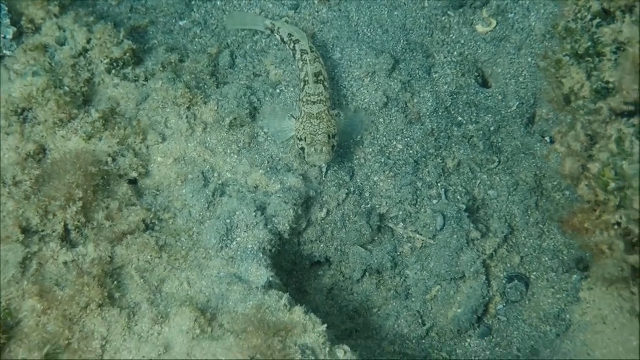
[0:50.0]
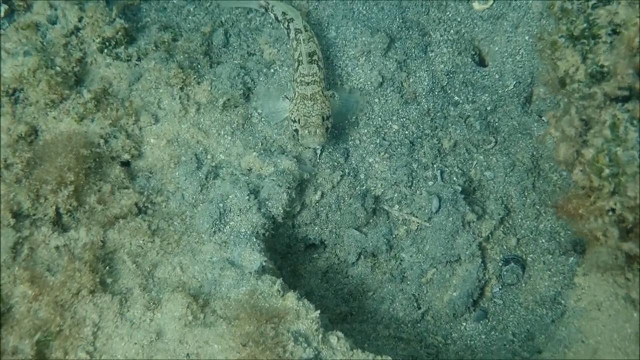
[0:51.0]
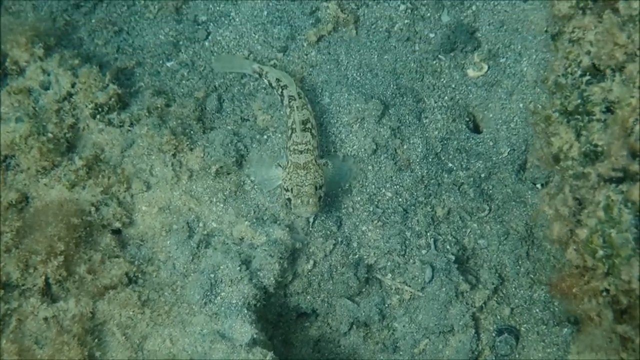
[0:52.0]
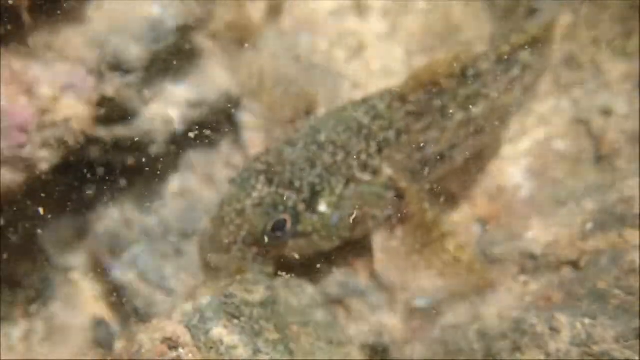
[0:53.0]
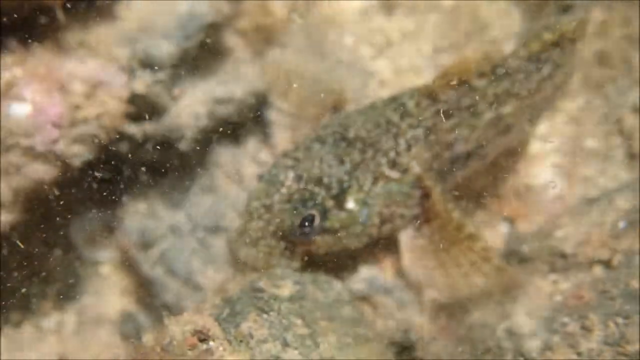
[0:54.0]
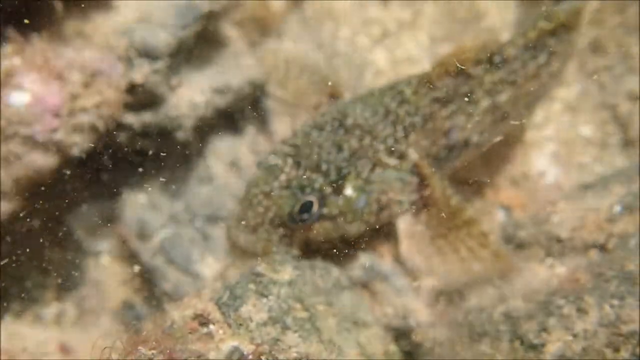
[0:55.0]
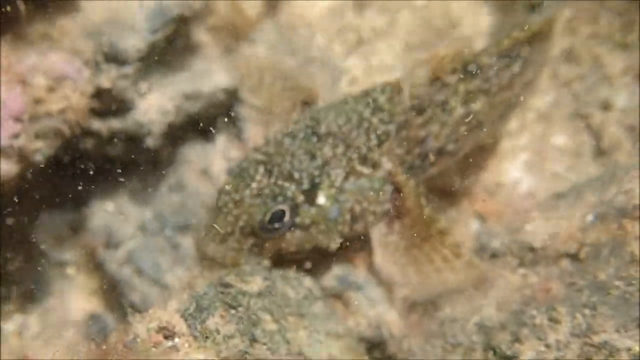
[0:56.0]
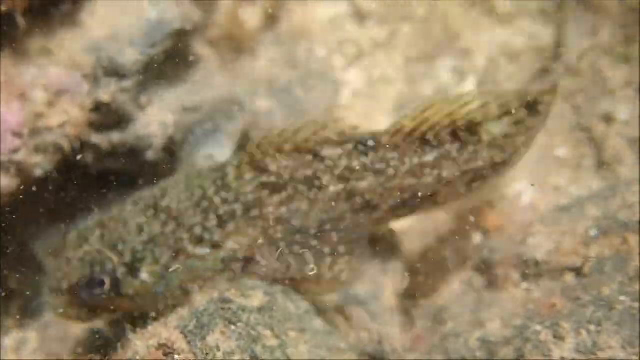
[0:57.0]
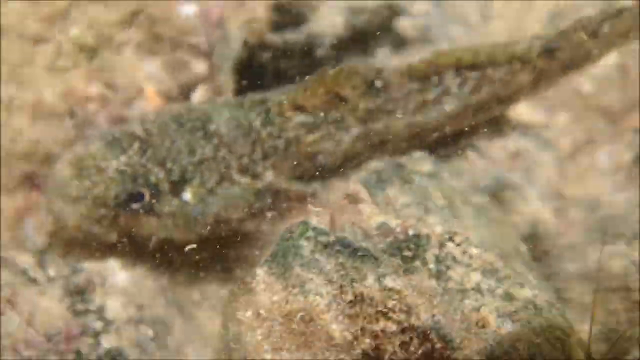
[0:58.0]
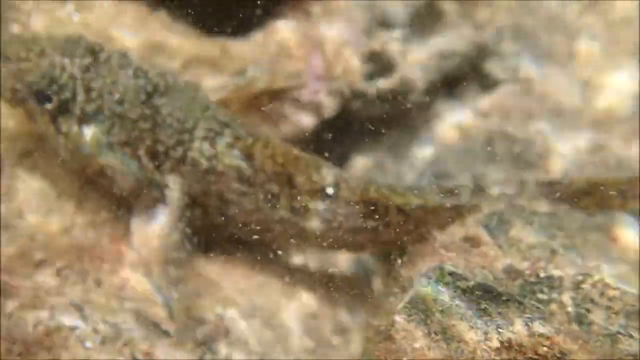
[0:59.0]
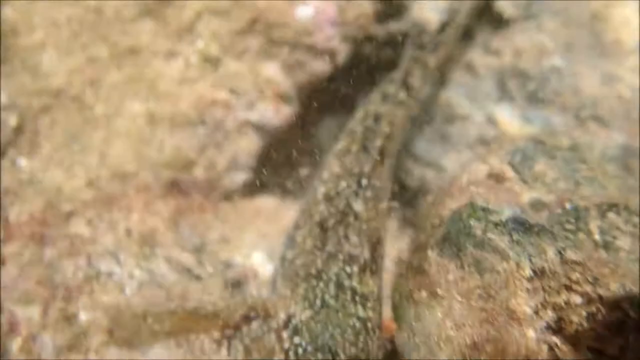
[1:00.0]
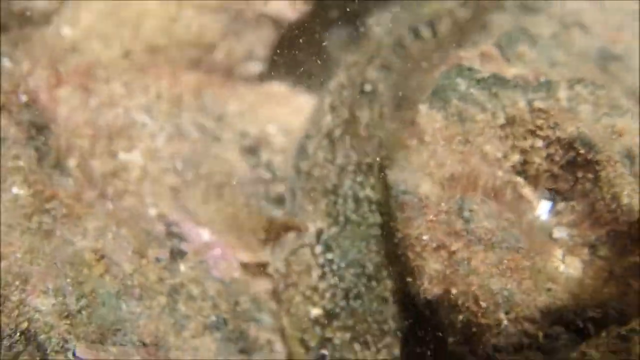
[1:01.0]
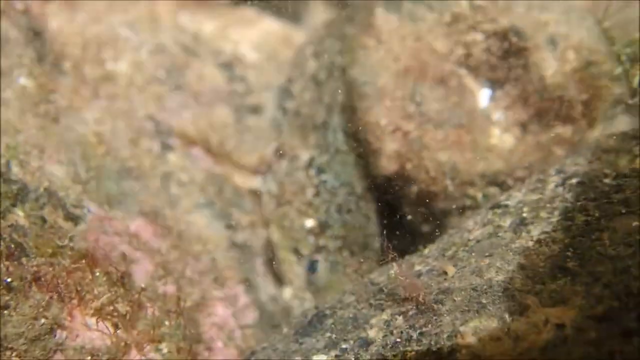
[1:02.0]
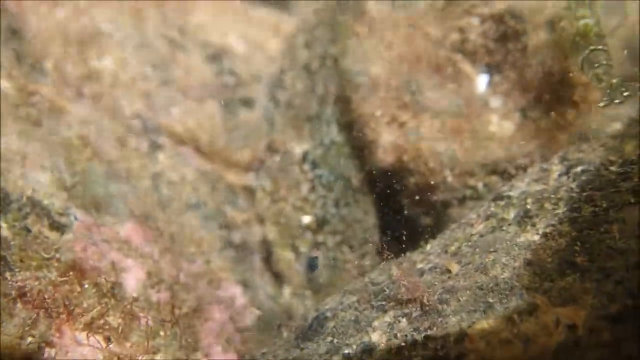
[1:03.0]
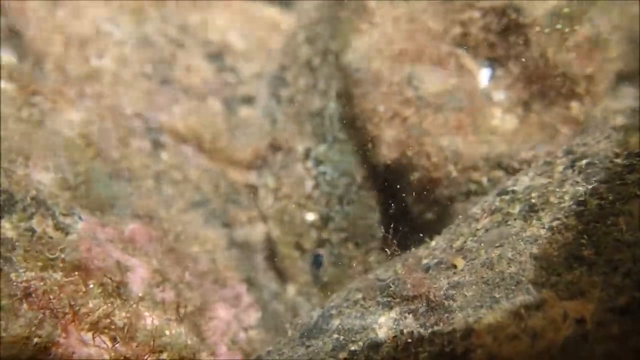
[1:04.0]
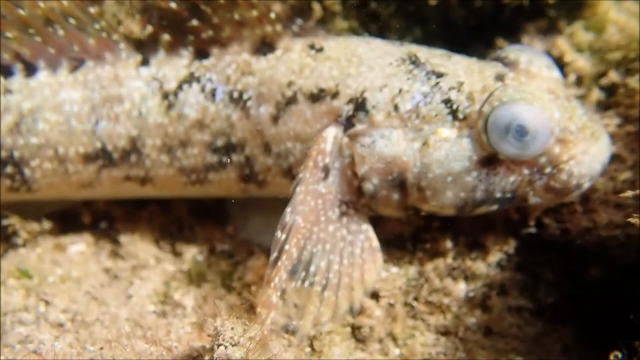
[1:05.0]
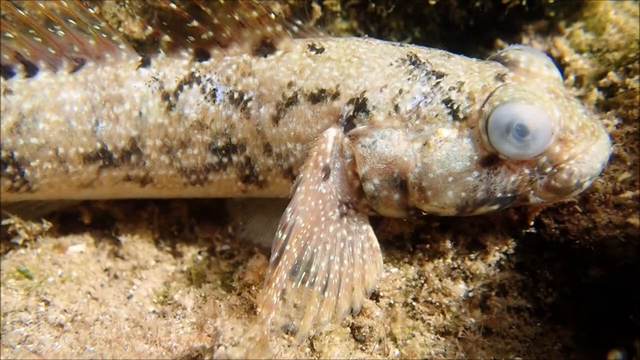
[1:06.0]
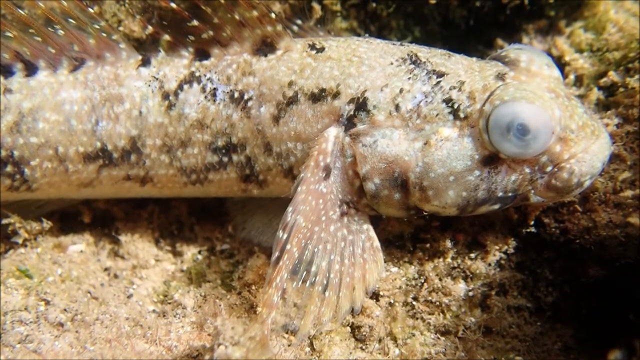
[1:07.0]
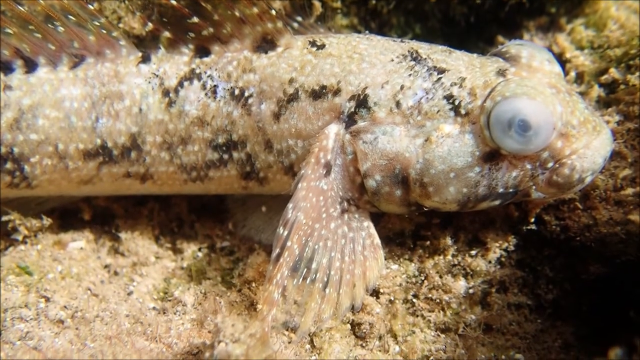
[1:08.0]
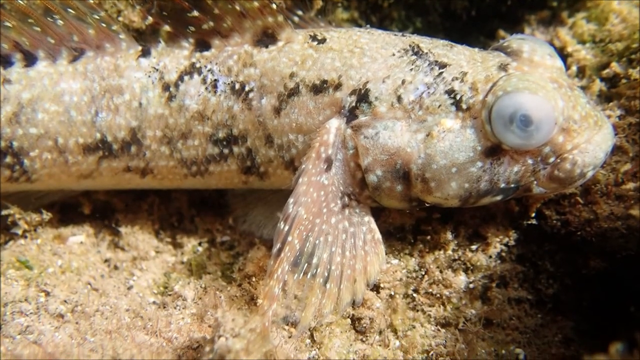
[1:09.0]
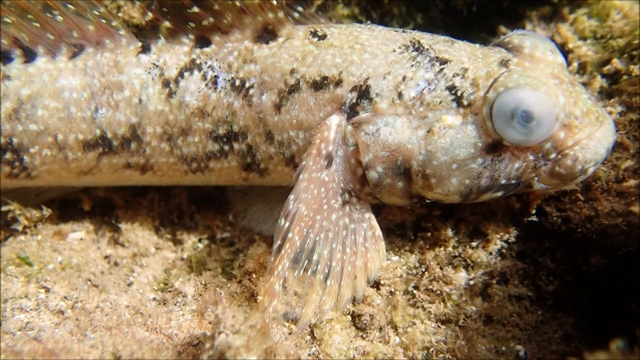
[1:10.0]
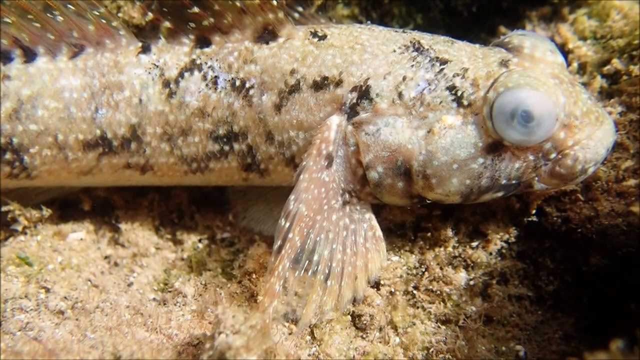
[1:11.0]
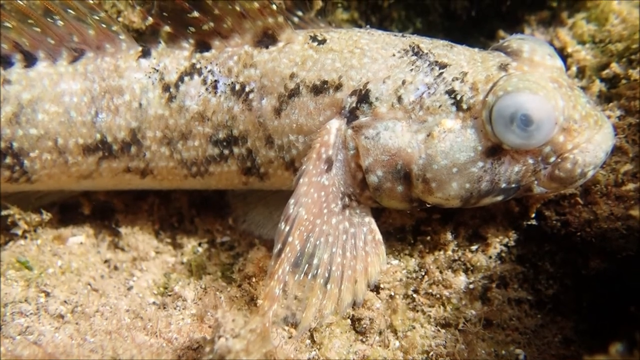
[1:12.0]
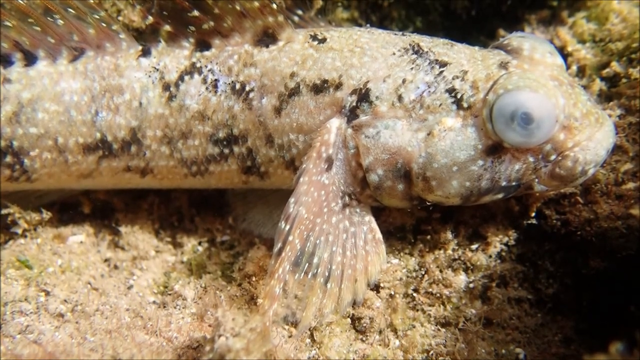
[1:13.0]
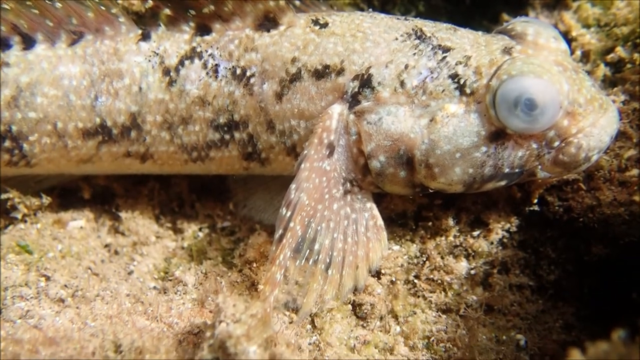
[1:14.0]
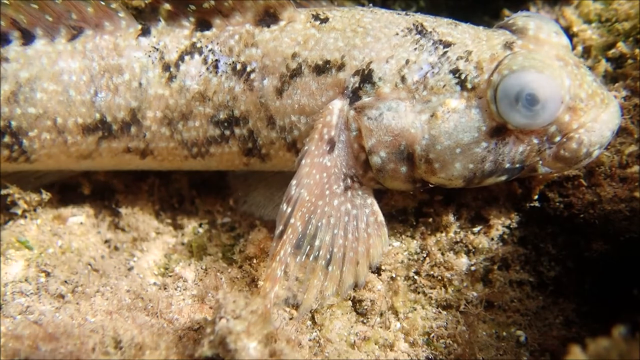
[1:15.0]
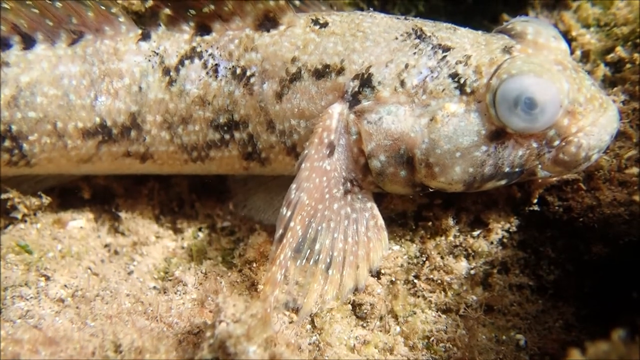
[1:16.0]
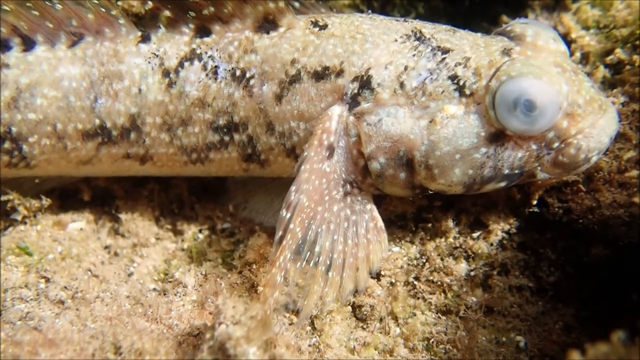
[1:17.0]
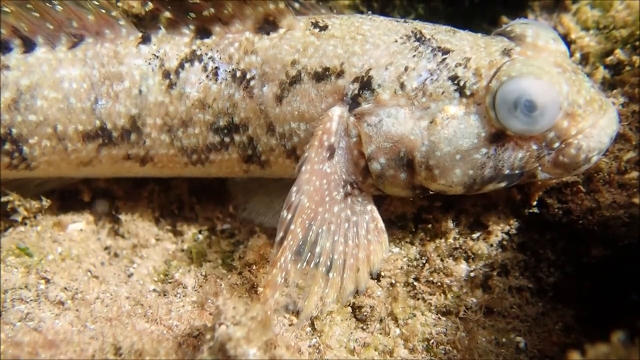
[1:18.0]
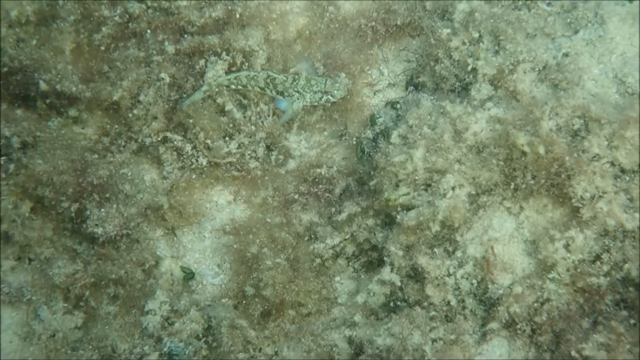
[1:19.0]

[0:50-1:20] The fish is hiding against the sand, a little less camouflaged, with more of its black patterns visible. The video then moves to a different fish of a different color in a more zoomed-in shot, with the camera focusing mostly on its face. This fish has a very grainy texture or pattern and fins, and instead of black and white it is mostly beige with a little dark brown, fitting a bit more into the sand. It swims away slightly, moving from the sand toward some rocks, showing how it swims. It has a tail, fins and eyes, all very basic: the eyes are round and the fins are more feathery. An even more zoomed-in shot shows its eyes in more detail: they are mostly white with two black pupils and look somewhat opaque.